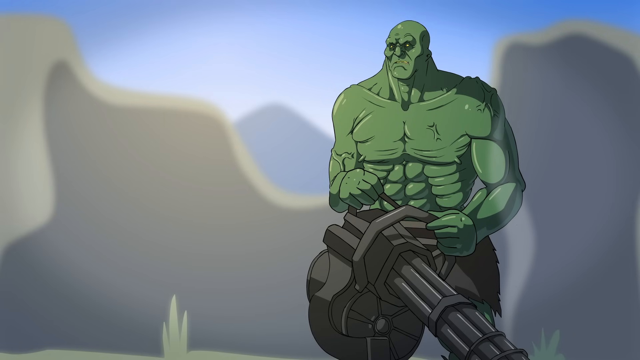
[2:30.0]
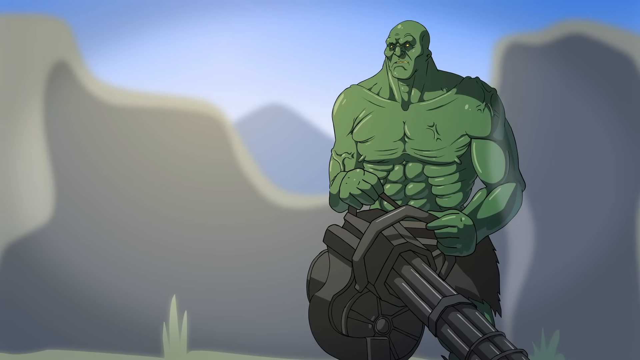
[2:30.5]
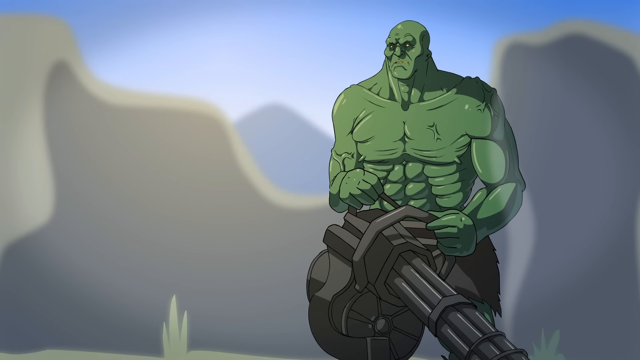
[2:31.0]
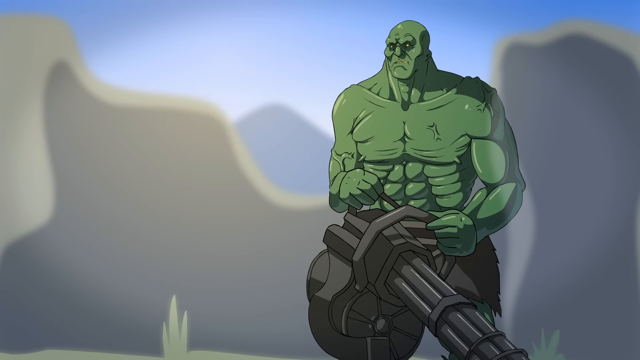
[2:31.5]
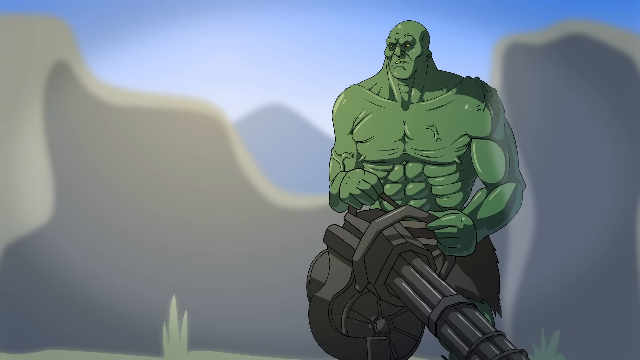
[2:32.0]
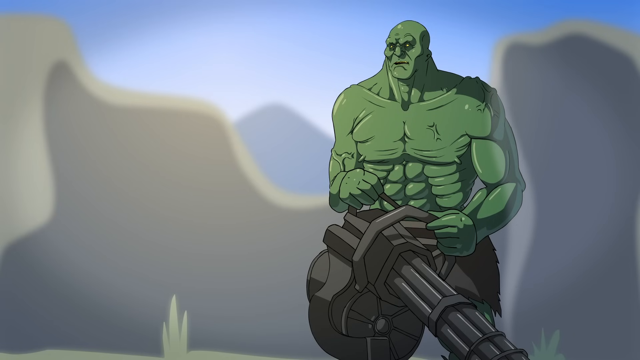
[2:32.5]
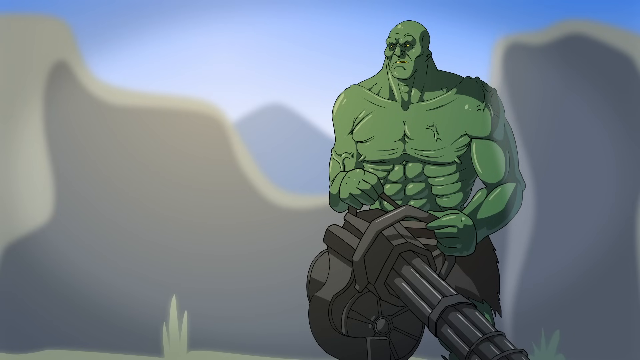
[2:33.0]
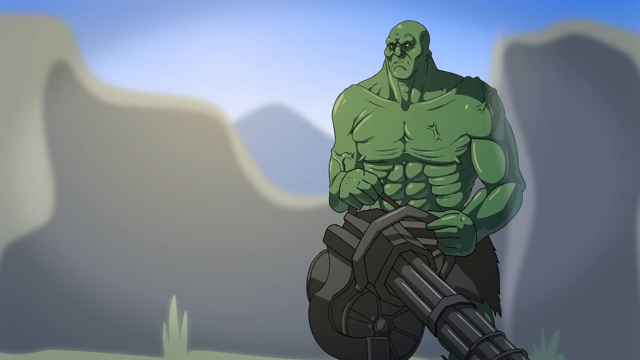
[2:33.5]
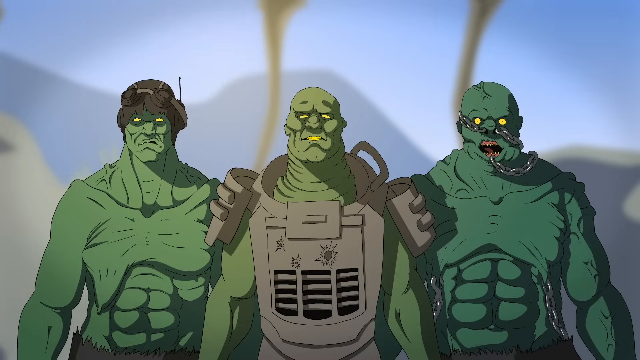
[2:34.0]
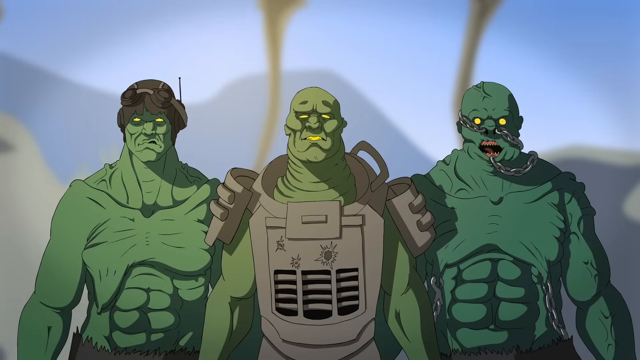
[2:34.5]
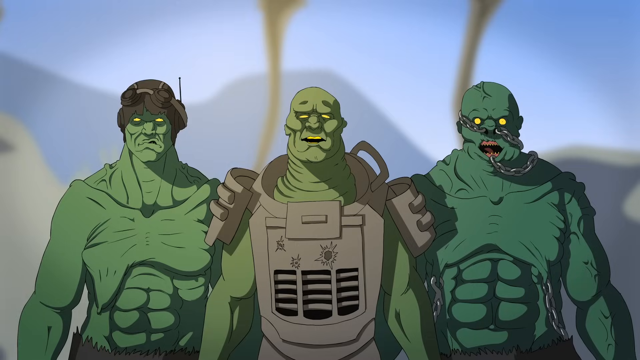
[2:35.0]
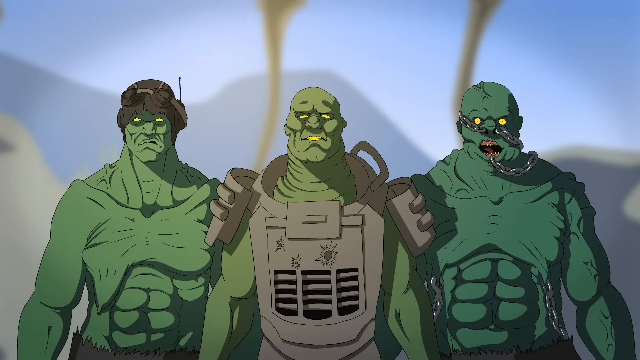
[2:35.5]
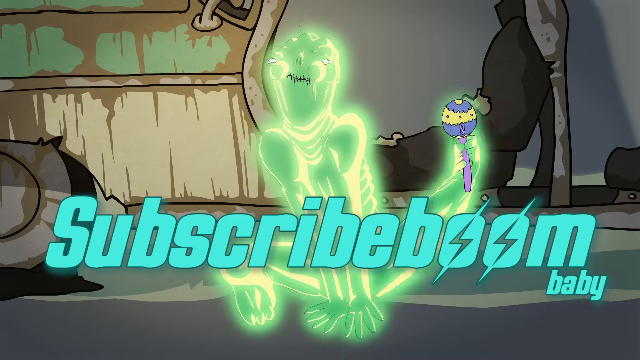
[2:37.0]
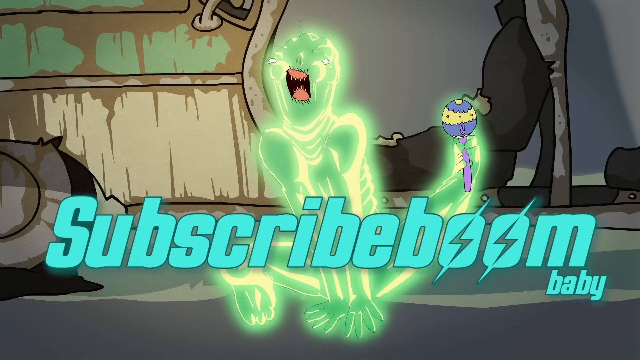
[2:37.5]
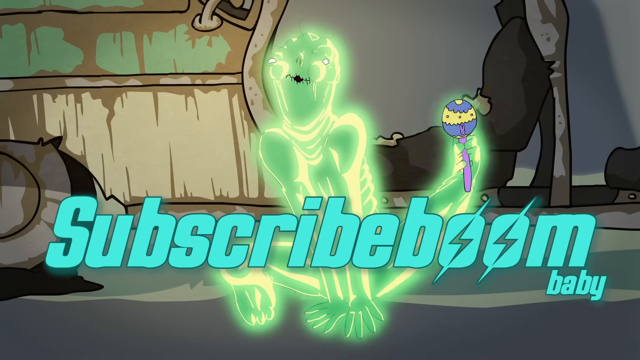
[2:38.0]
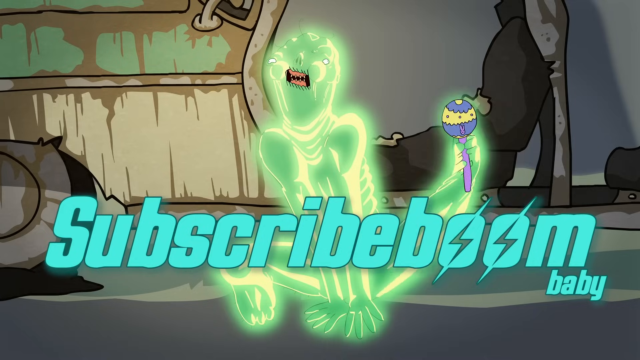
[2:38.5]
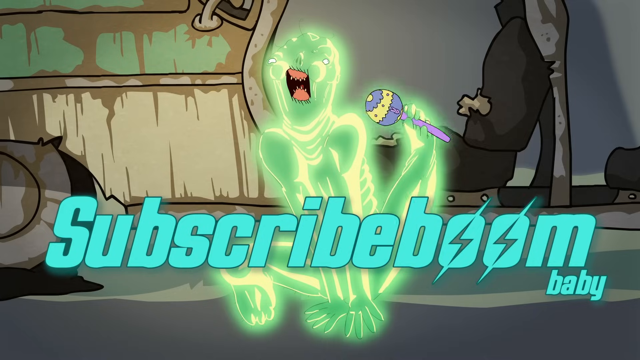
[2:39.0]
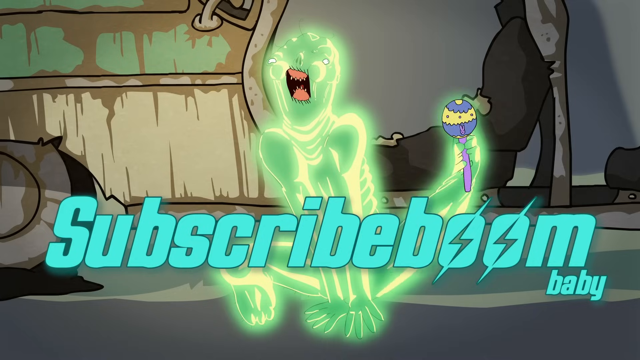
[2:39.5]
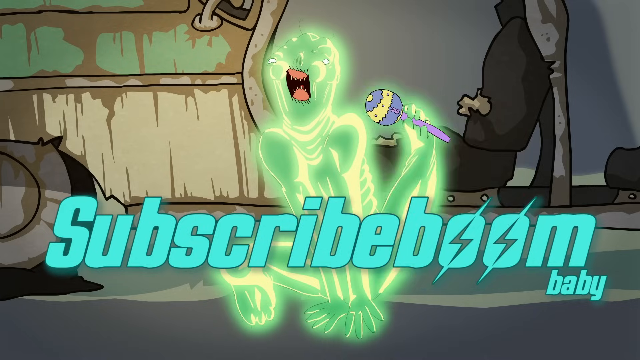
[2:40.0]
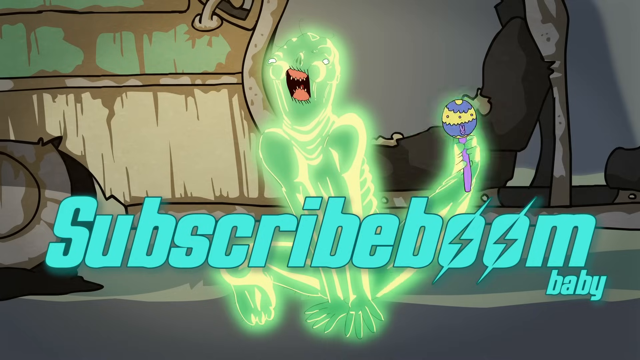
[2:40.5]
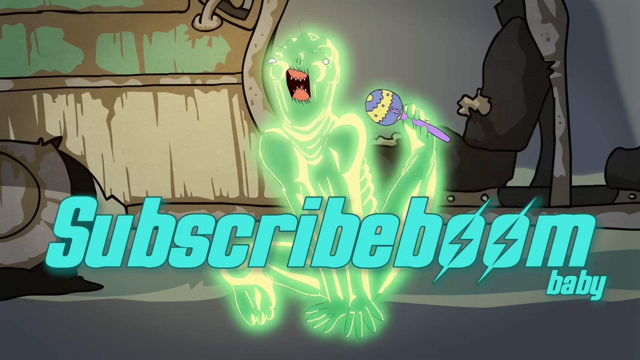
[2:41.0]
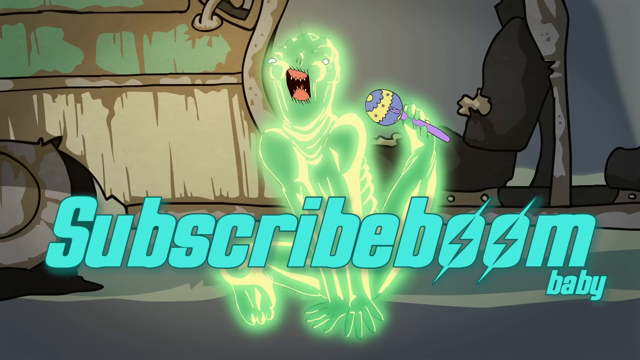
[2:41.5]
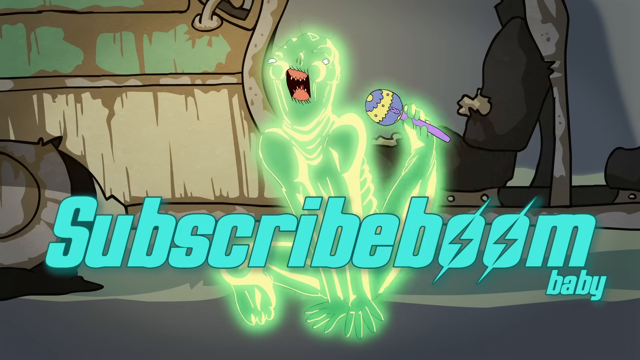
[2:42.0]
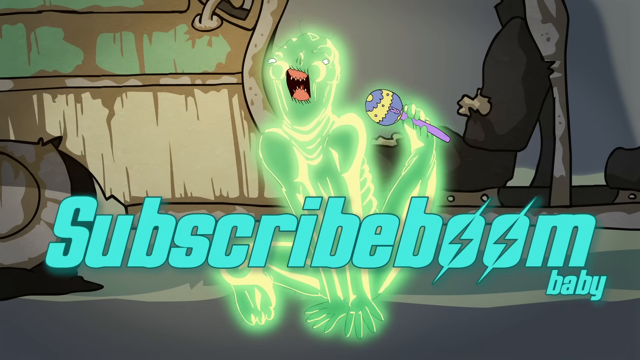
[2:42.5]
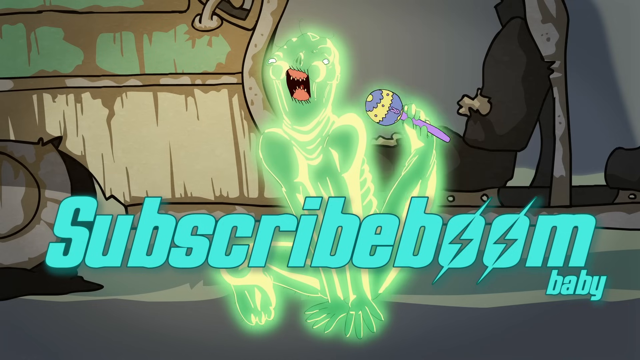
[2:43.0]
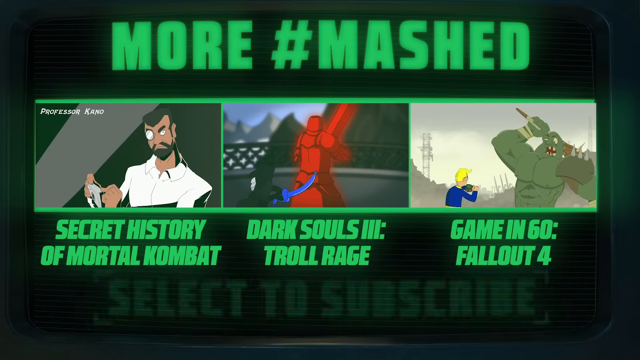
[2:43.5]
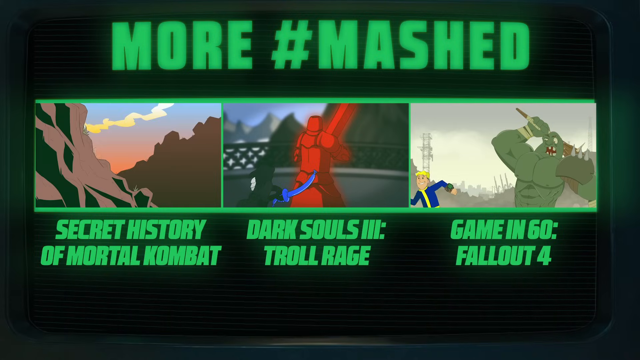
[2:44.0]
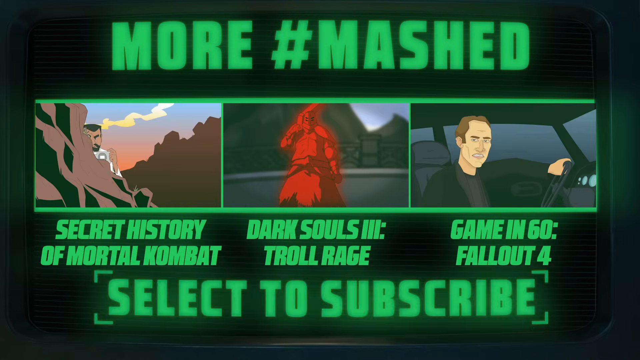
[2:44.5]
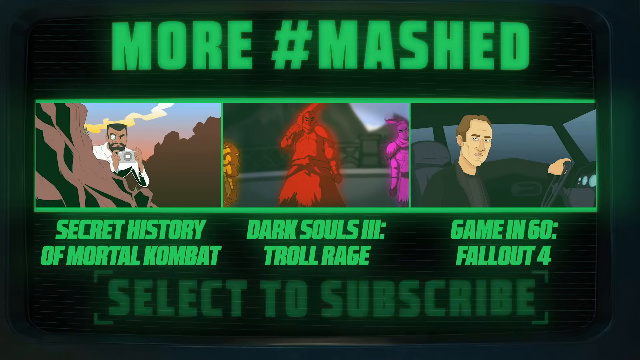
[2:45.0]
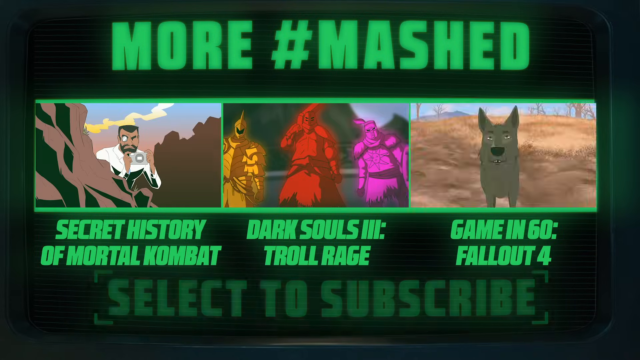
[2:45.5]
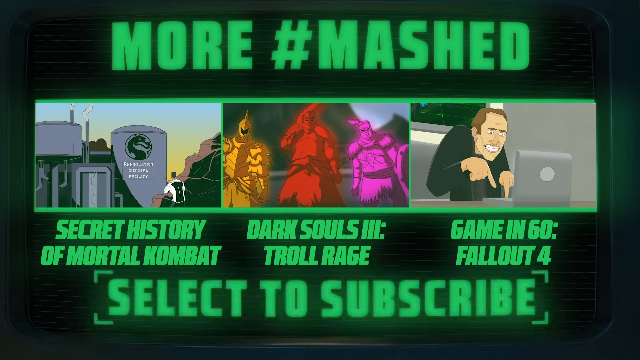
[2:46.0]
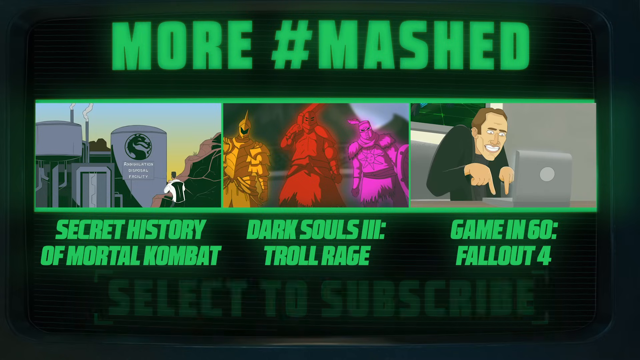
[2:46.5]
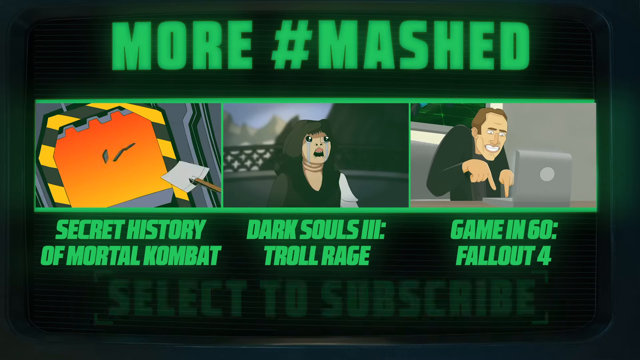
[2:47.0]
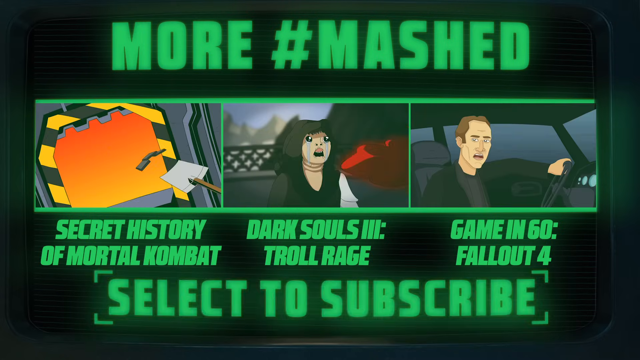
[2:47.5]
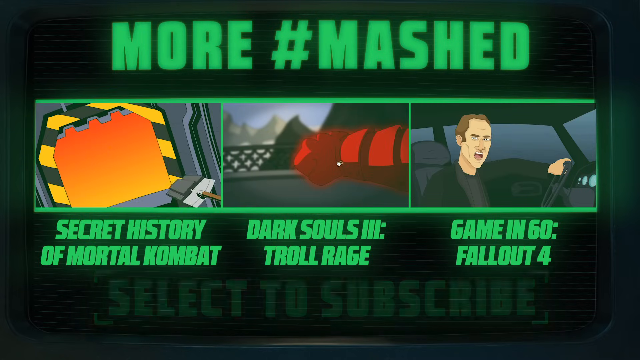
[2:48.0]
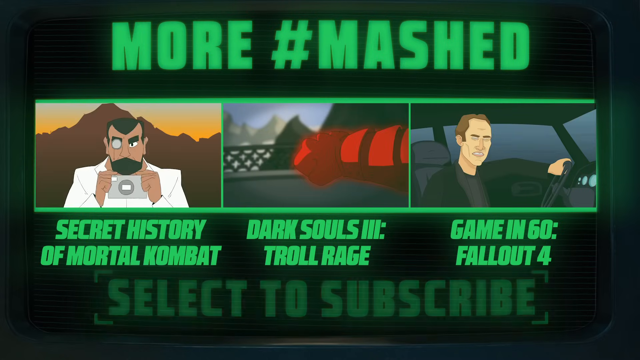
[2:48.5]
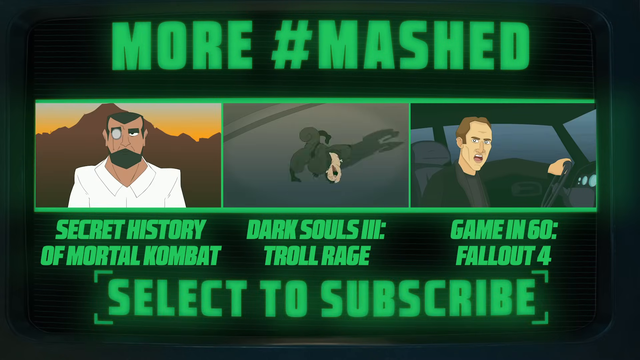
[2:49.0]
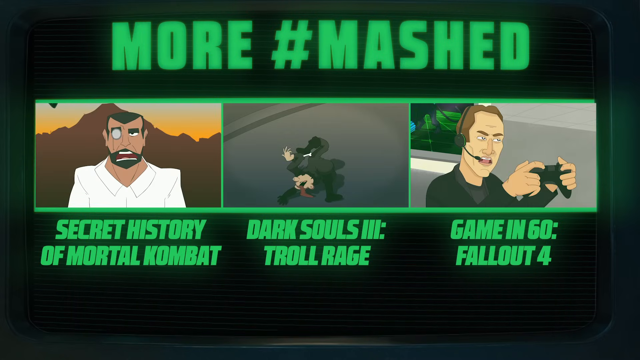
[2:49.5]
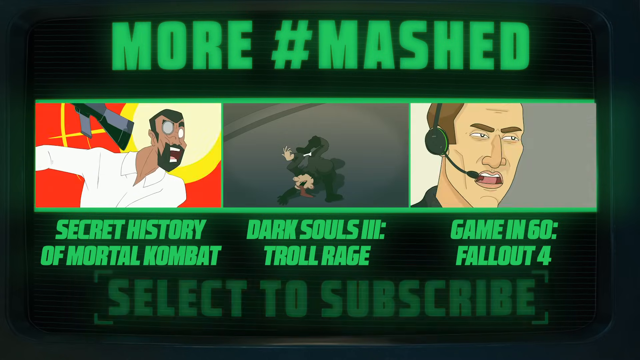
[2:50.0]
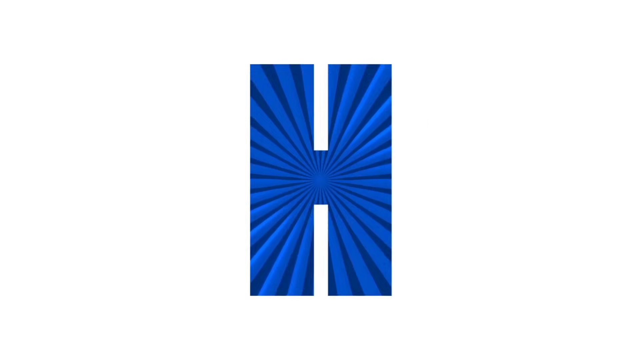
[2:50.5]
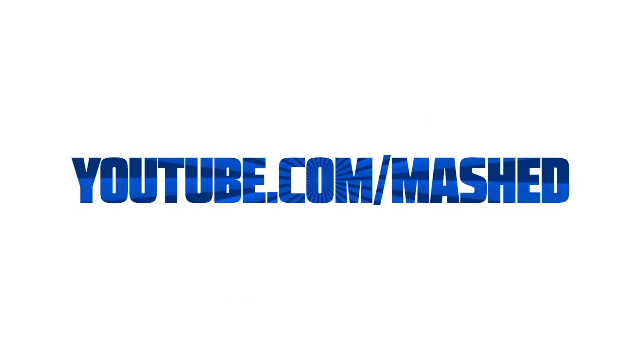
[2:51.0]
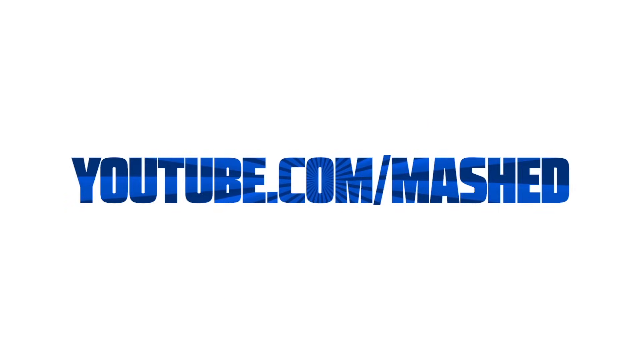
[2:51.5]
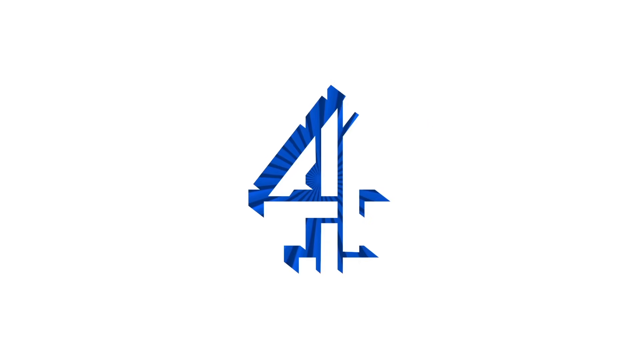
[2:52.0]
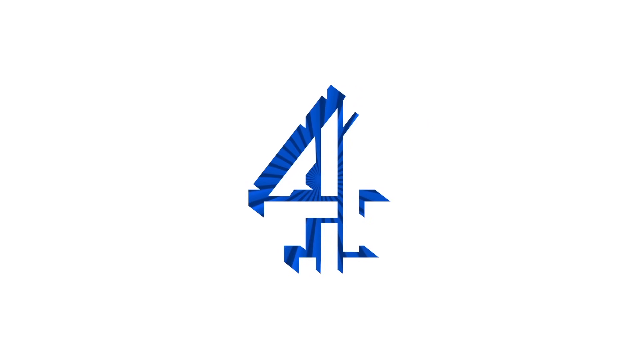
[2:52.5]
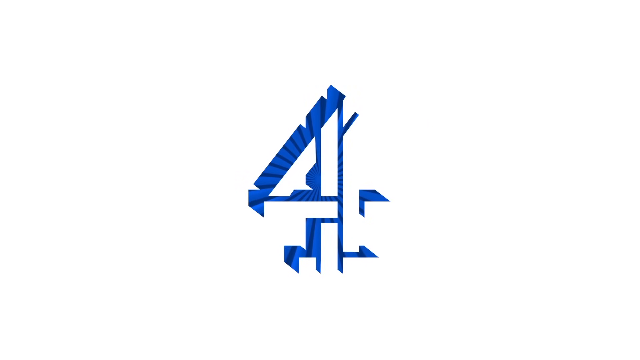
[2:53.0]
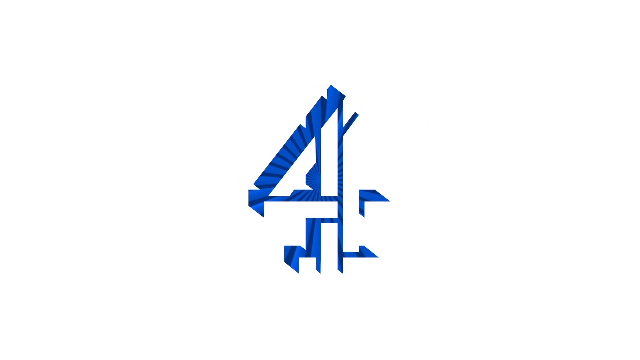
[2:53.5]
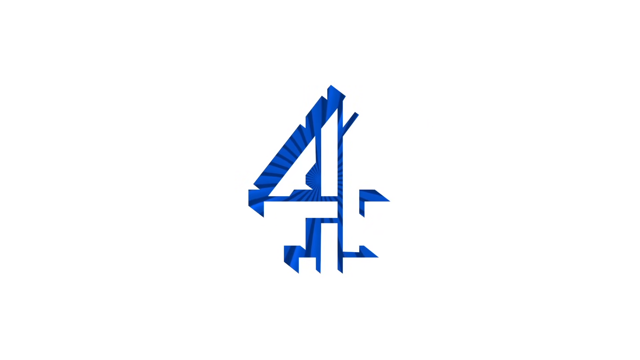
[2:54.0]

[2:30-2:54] Standing next to the explosion is an all-green creature with a very muscular stomach, chest and shoulders, holding a very big gun in his hands; the gun looks like it has six or seven barrels arranged in a circle. Three figures like him appear, two on the left and right flanking the one in the middle, who wears armor. The screen goes black, and another image comes in that says "subscribe, boom, baby." The glowing green zombie-looking creature holds a purple rattle with what should be its foot, rattling it back and forth. A screen then promotes other videos by this creator, one of them called "The Secret History of Mortal Kombat." Another credits screen shows the URL of their YouTube channel.